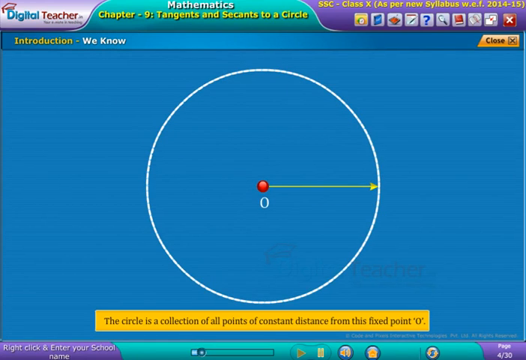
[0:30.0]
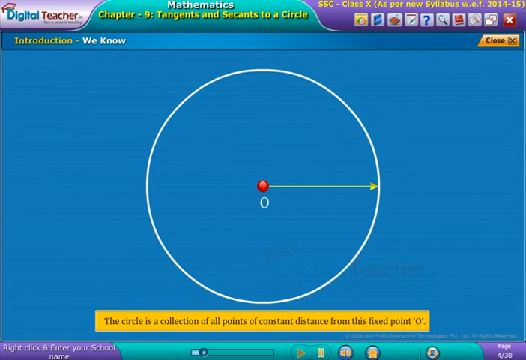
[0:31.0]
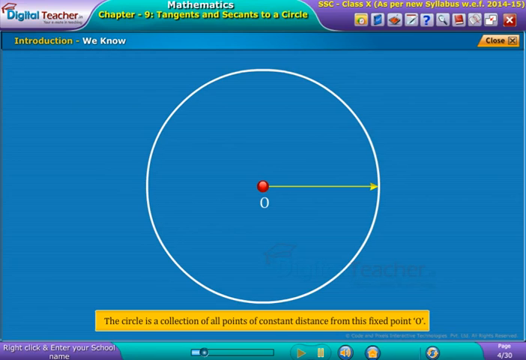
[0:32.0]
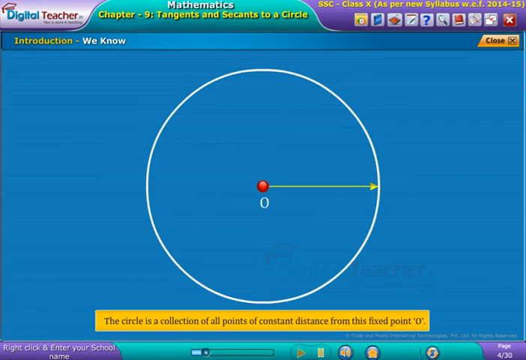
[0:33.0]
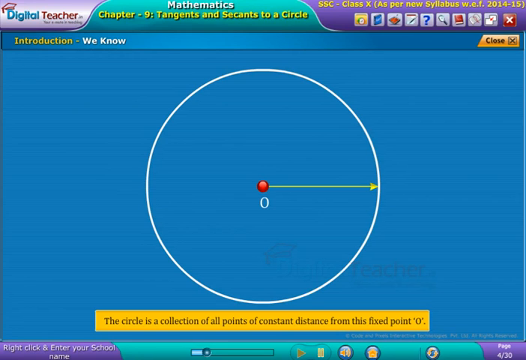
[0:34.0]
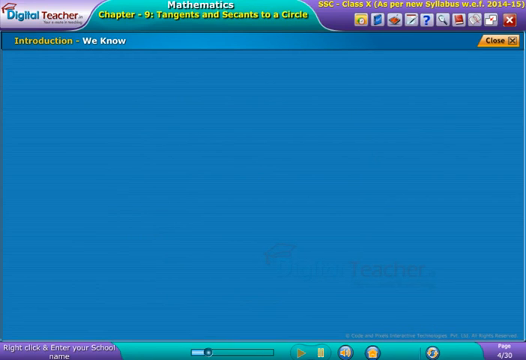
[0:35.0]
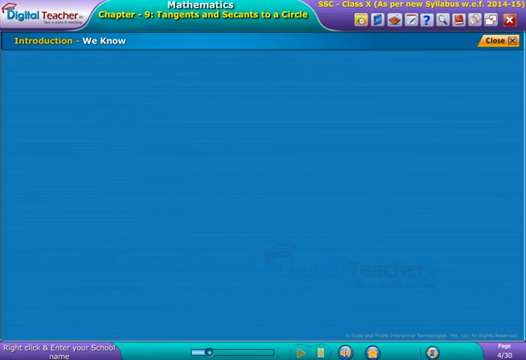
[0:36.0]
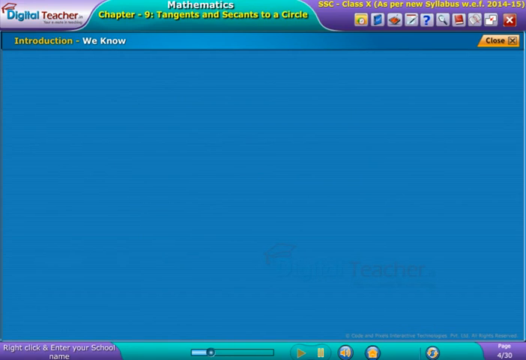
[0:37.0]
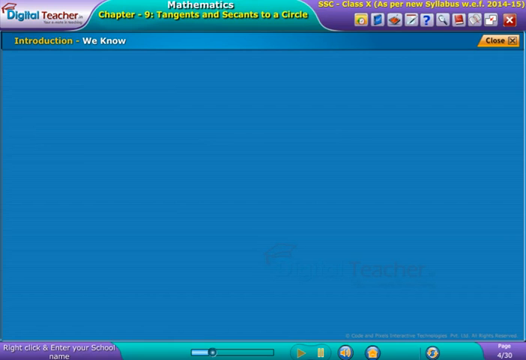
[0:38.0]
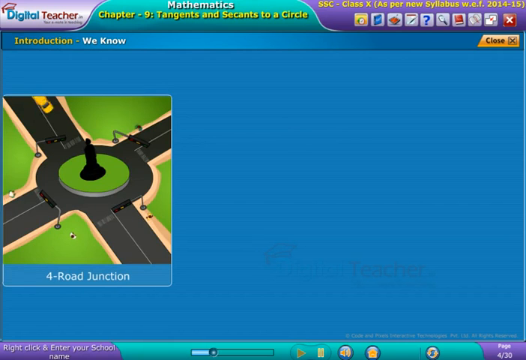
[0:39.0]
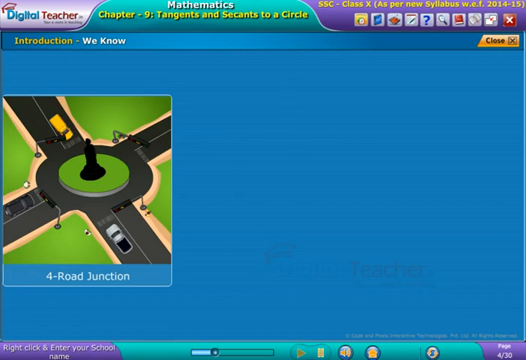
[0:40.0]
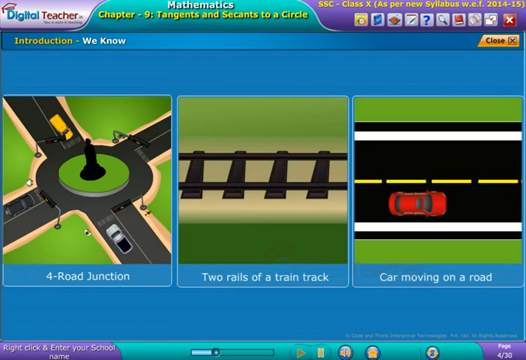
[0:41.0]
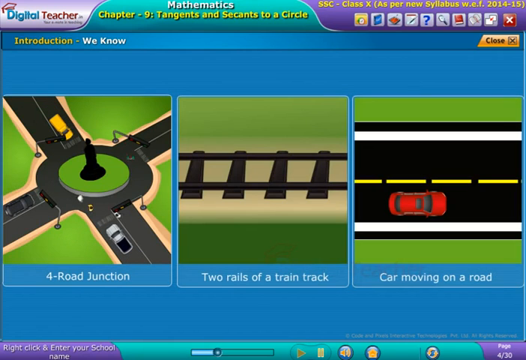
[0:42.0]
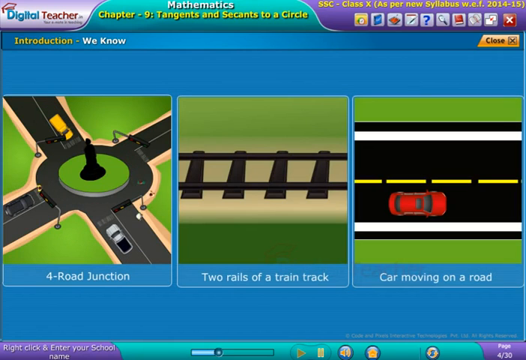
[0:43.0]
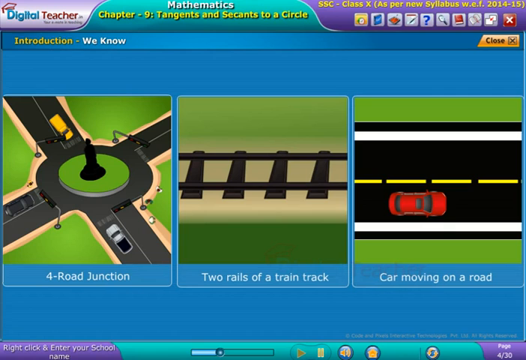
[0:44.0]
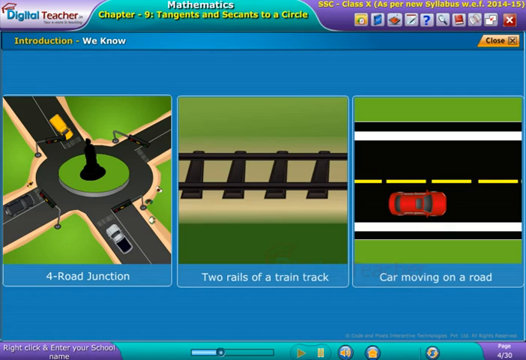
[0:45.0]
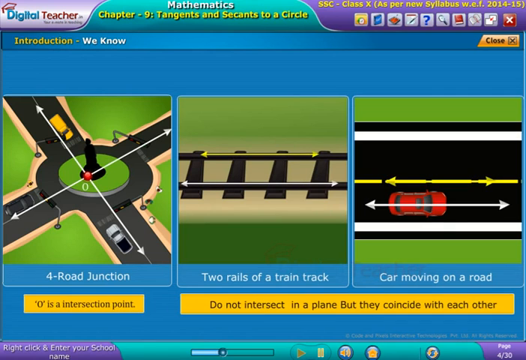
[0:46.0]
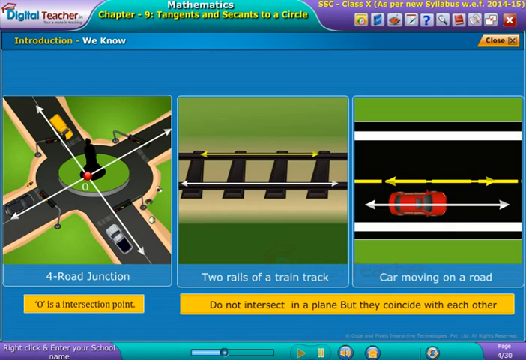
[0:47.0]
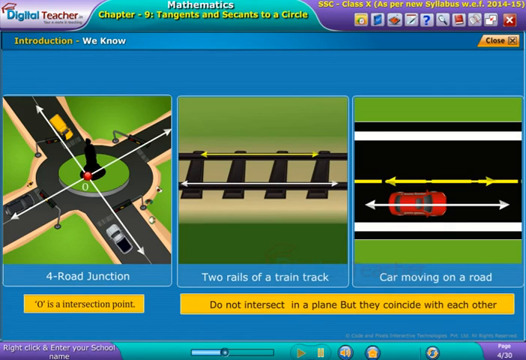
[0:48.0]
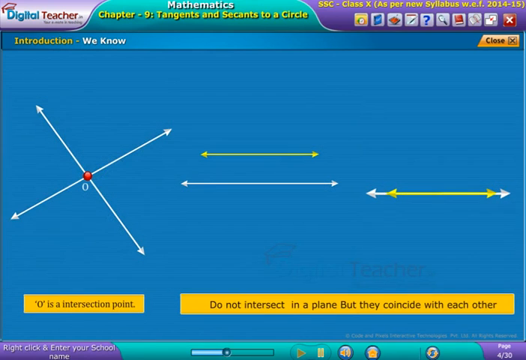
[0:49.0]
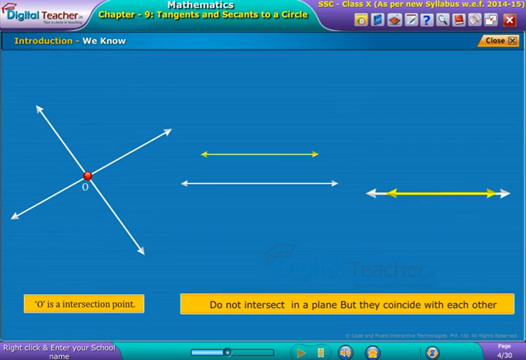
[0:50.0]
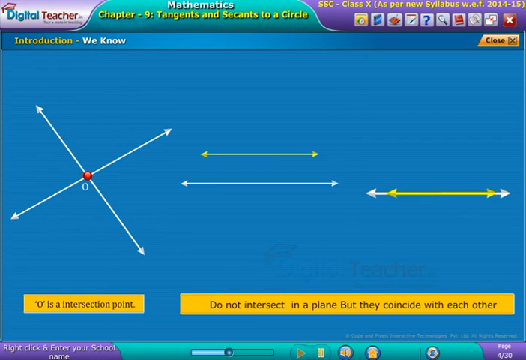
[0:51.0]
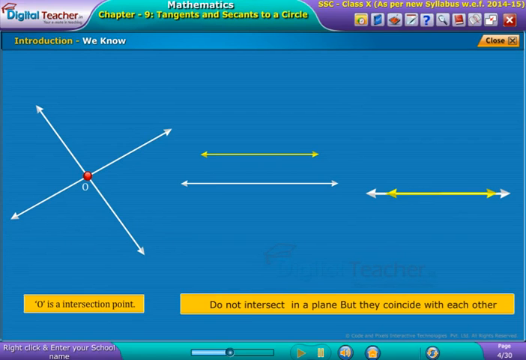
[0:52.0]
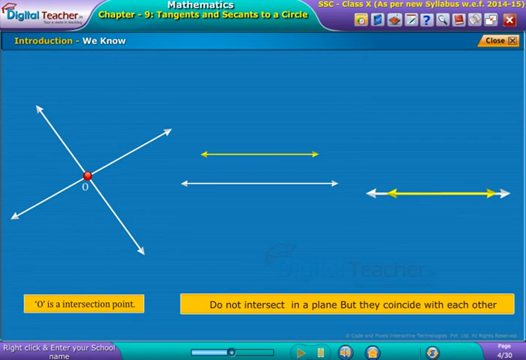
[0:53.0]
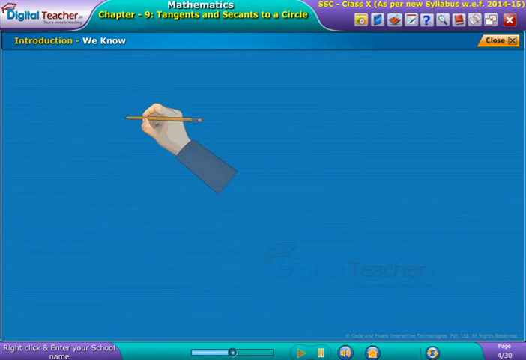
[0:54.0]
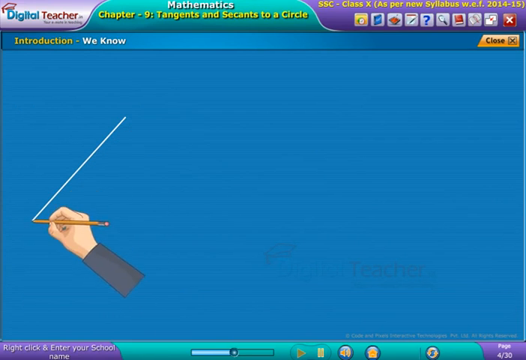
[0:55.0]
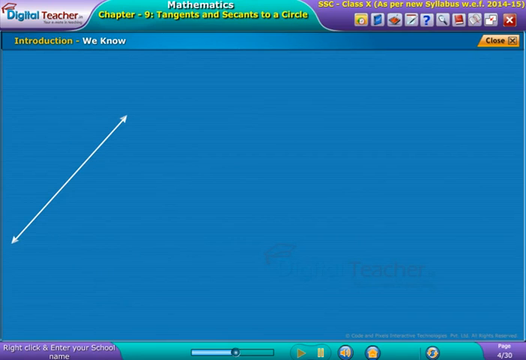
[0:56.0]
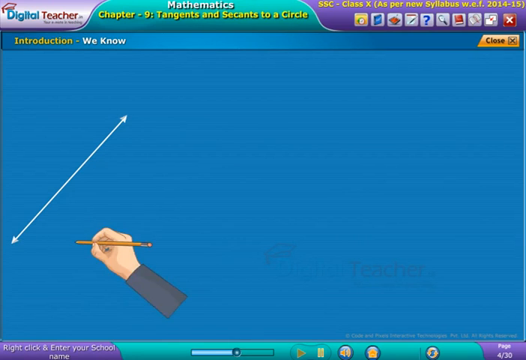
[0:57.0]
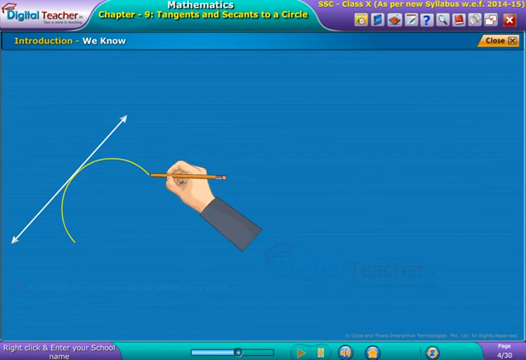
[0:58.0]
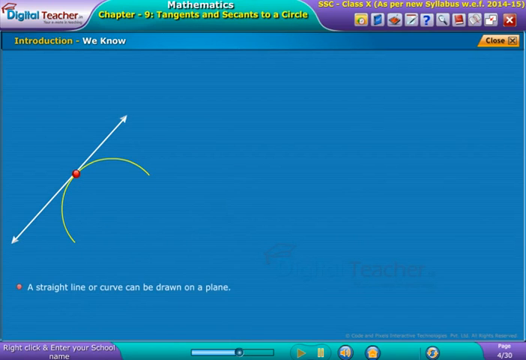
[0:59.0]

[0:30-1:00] The animation continues with a yellow arrow coming out of the circle to the right. At the bottom, text reads "the circle is a collection of all points of constant distance from this fixed point zero." The diagram then disappears, and three animations appear: on the left, one labeled "road junction" showing what is apparently another circle; in the middle, two rails of a train track; and on the right, one labeled "car moving on a road". These show different intersection points. For the road junction, text says "O is an intersection point", showing the circle as an intersection point of a cross section of four lanes. The two rails of the train track and the car moving on a road are shown not intersecting in a plane but coinciding with each other. Some basic lines are then shown to define these ideas.